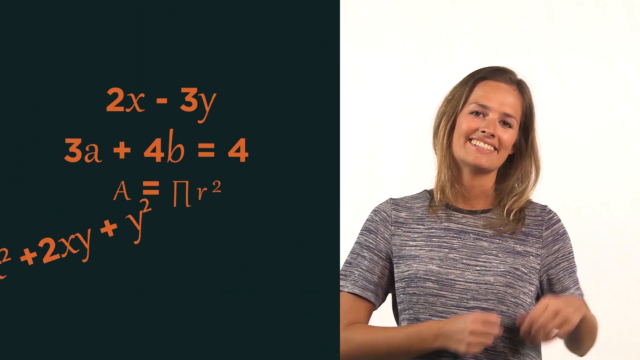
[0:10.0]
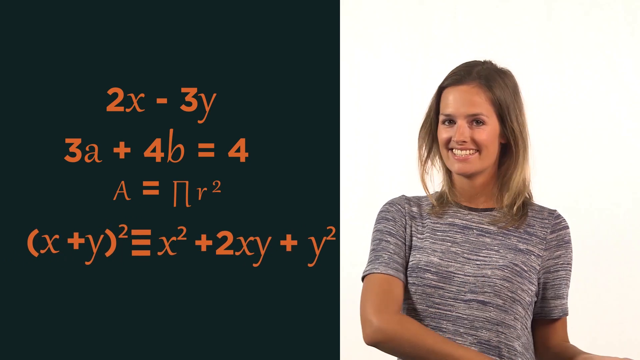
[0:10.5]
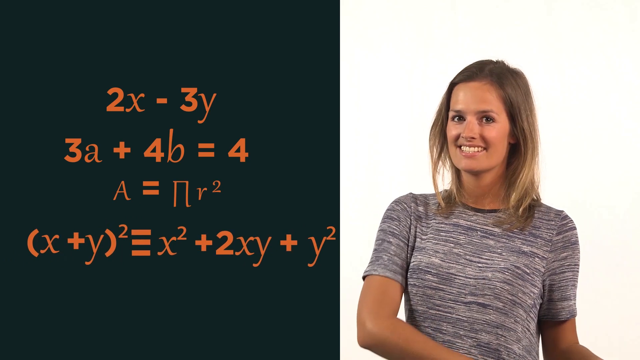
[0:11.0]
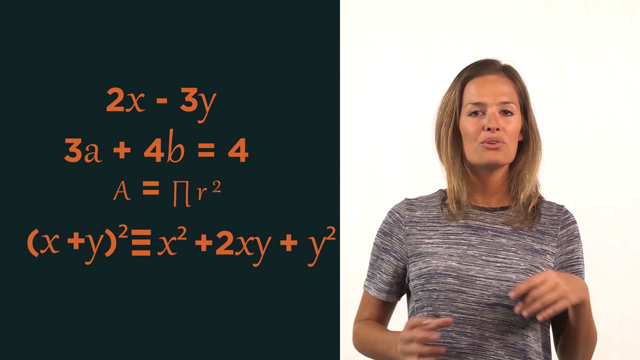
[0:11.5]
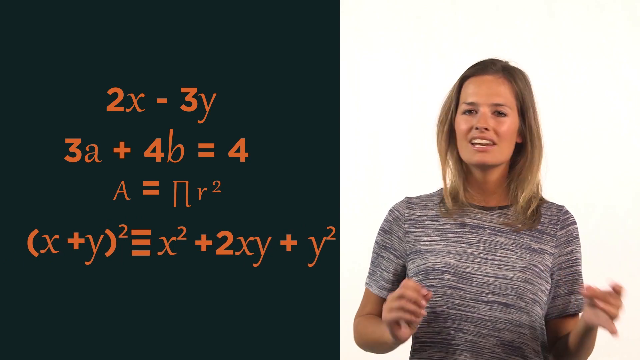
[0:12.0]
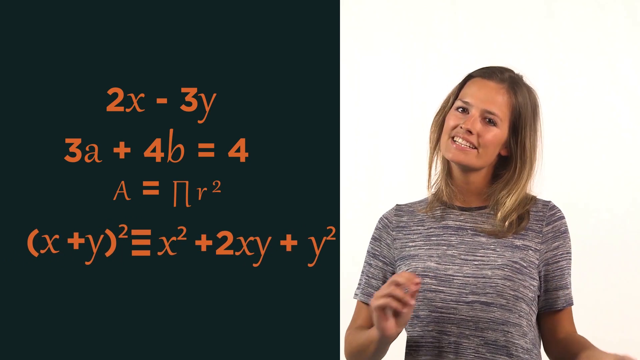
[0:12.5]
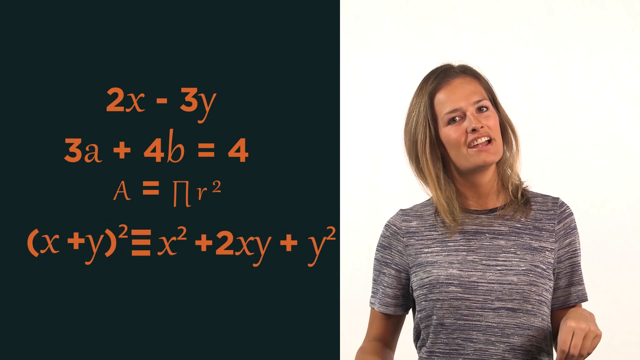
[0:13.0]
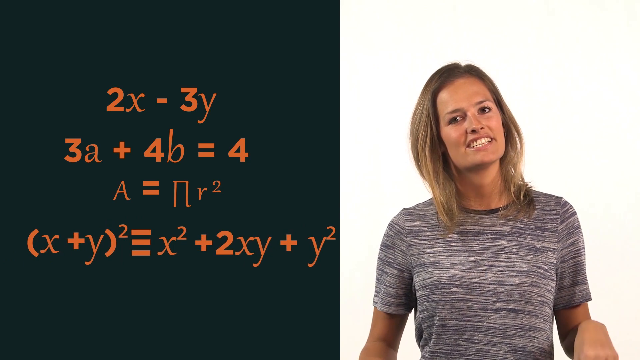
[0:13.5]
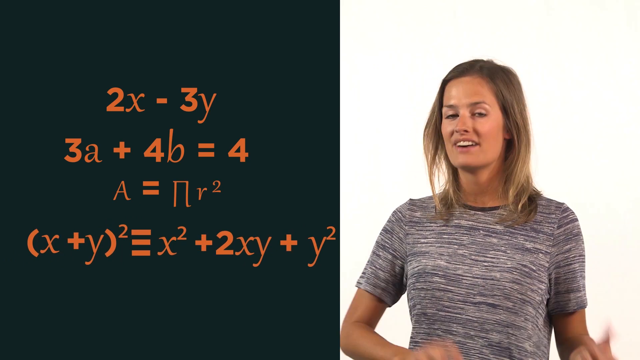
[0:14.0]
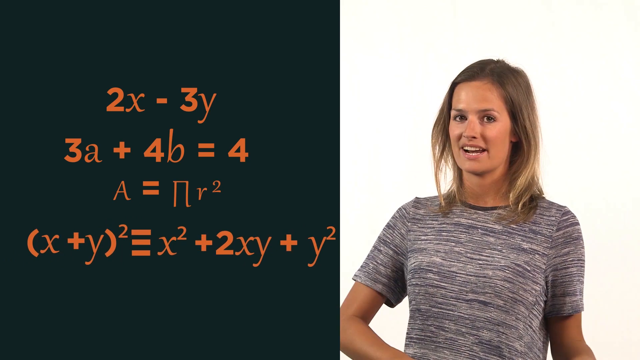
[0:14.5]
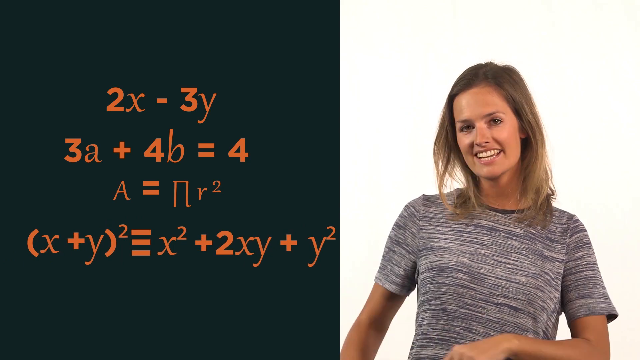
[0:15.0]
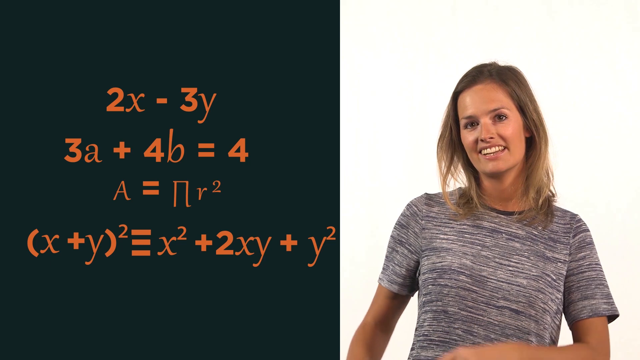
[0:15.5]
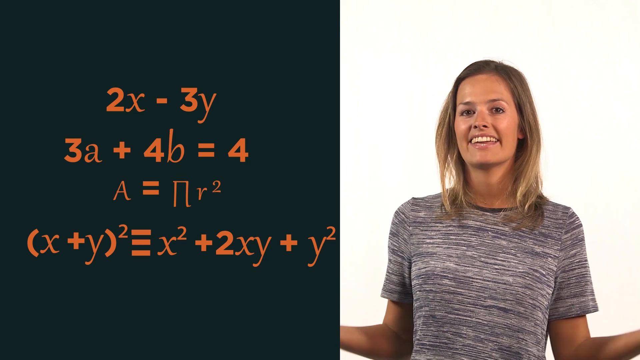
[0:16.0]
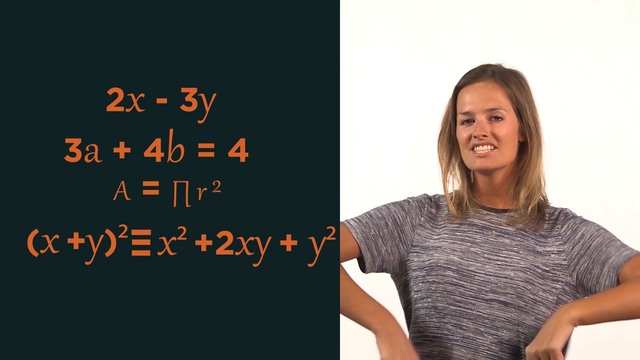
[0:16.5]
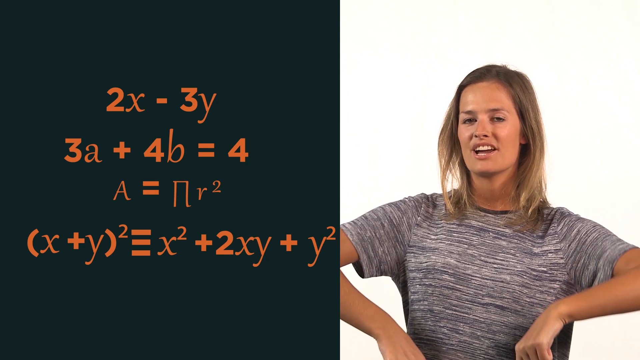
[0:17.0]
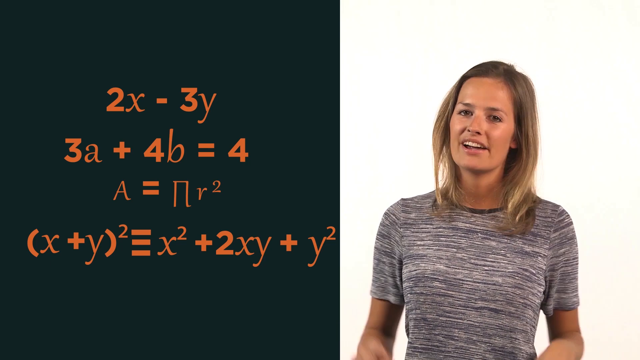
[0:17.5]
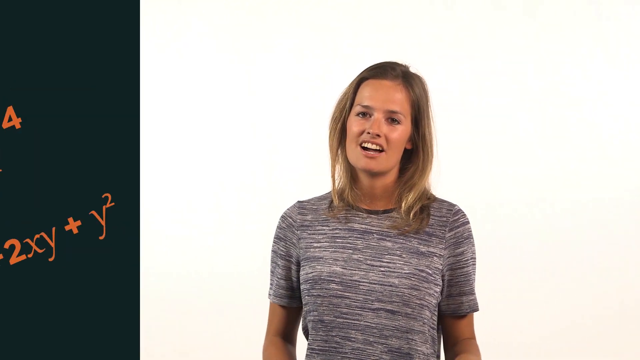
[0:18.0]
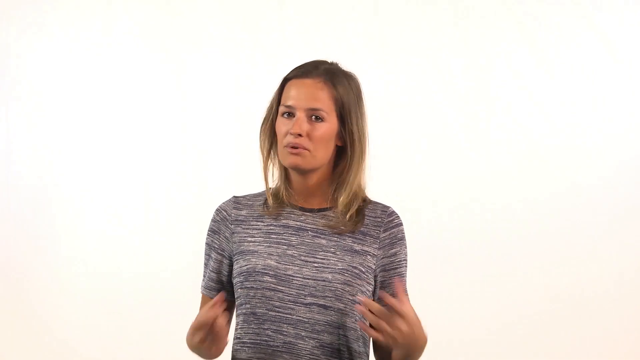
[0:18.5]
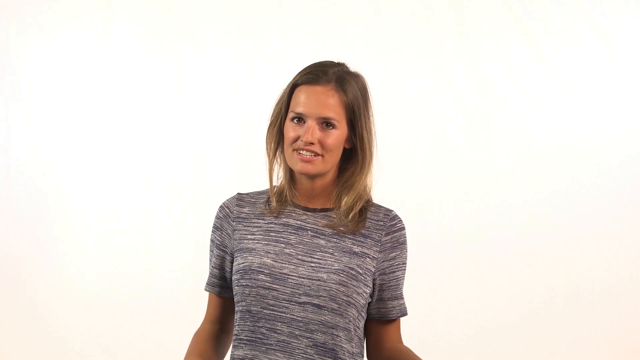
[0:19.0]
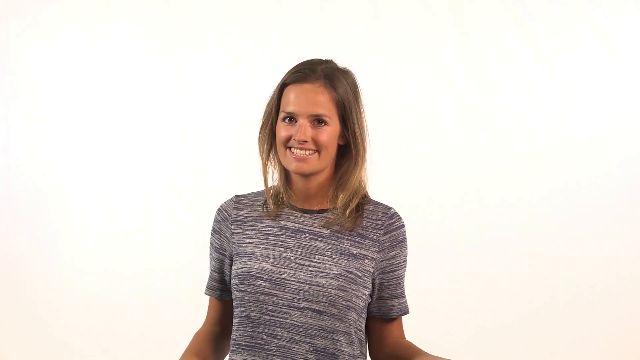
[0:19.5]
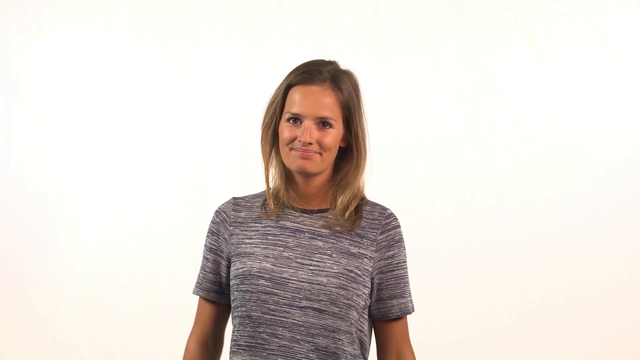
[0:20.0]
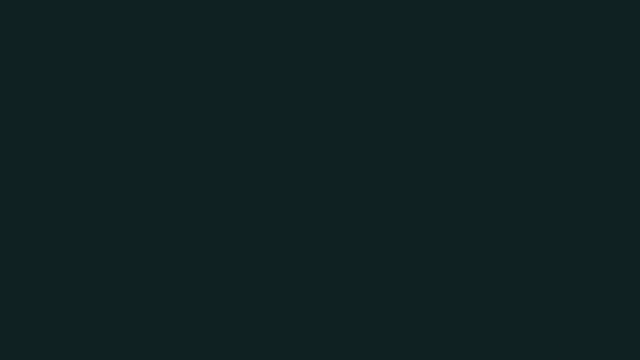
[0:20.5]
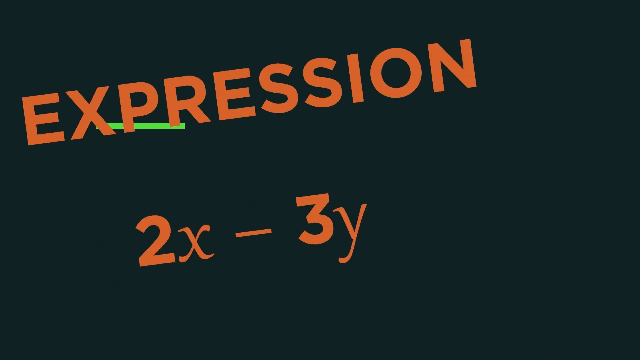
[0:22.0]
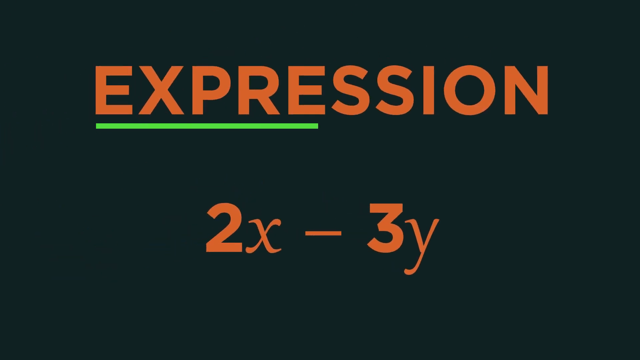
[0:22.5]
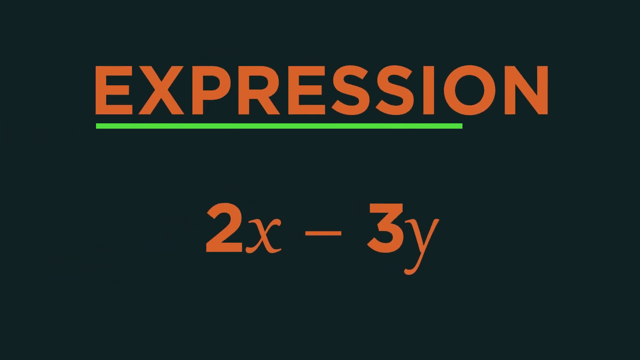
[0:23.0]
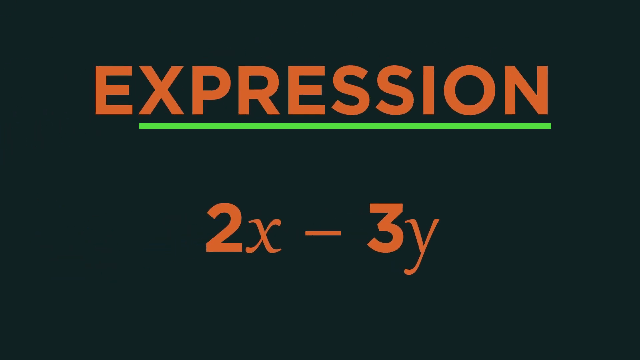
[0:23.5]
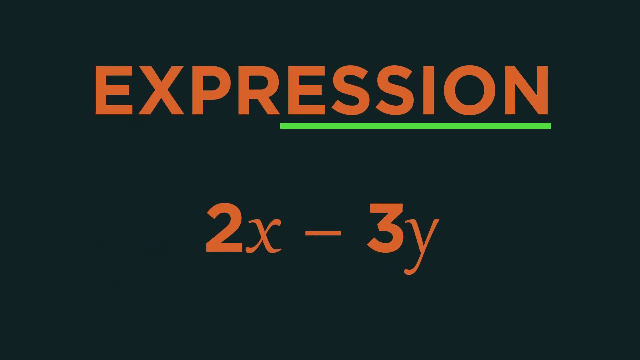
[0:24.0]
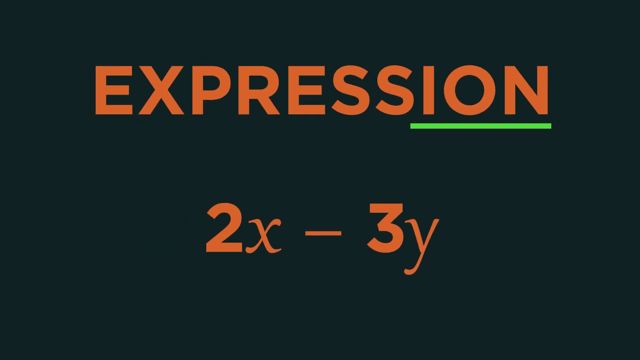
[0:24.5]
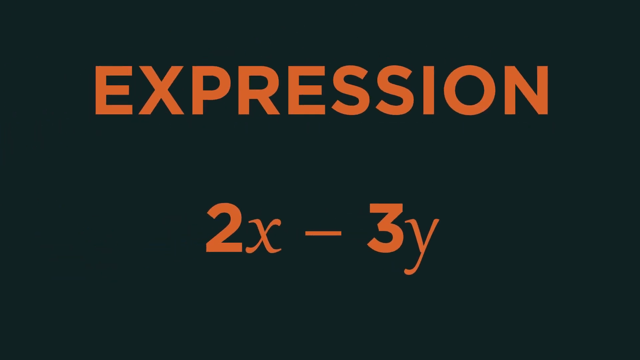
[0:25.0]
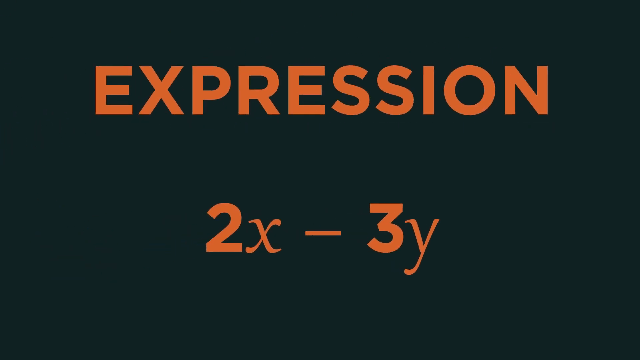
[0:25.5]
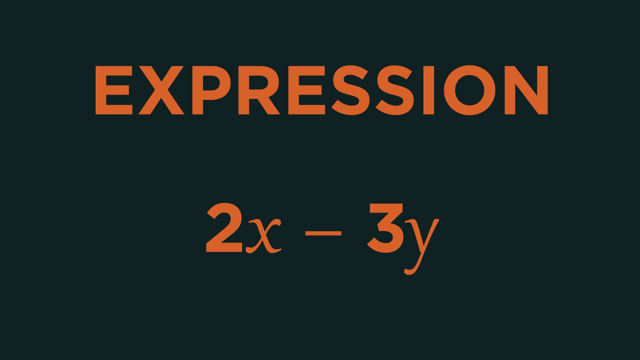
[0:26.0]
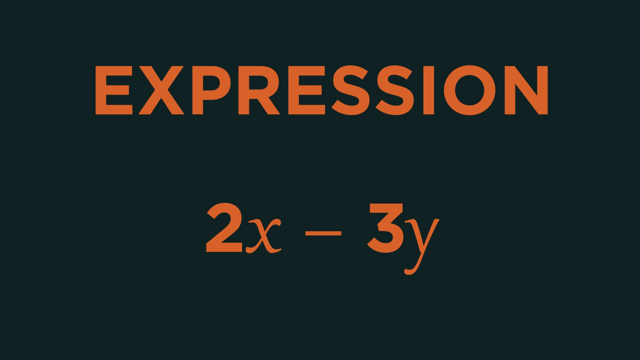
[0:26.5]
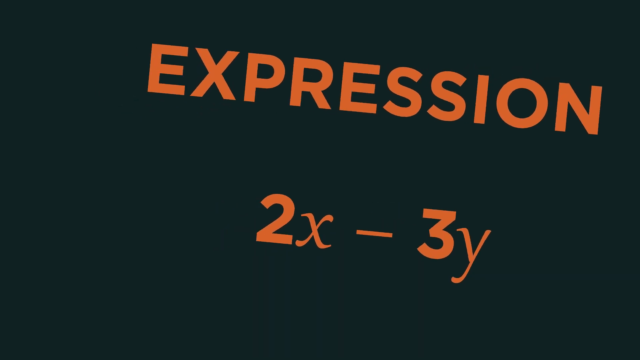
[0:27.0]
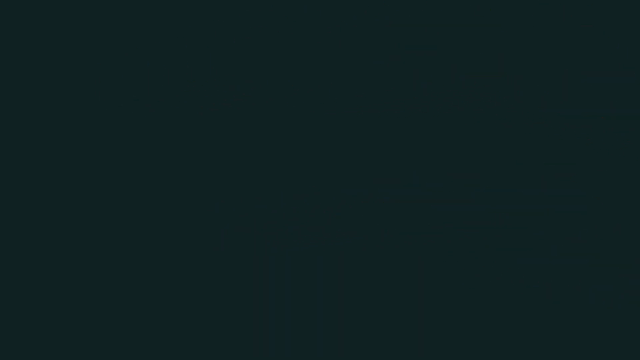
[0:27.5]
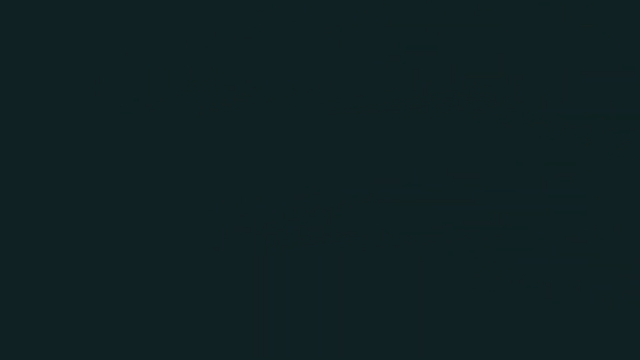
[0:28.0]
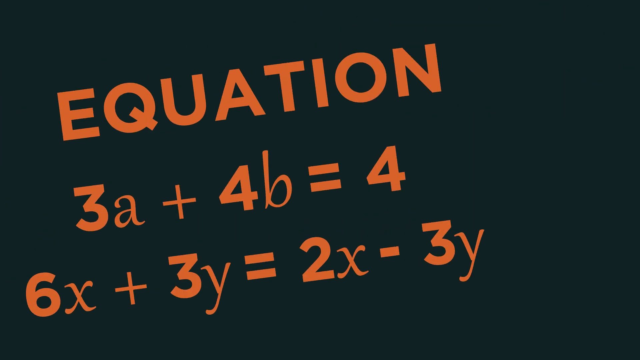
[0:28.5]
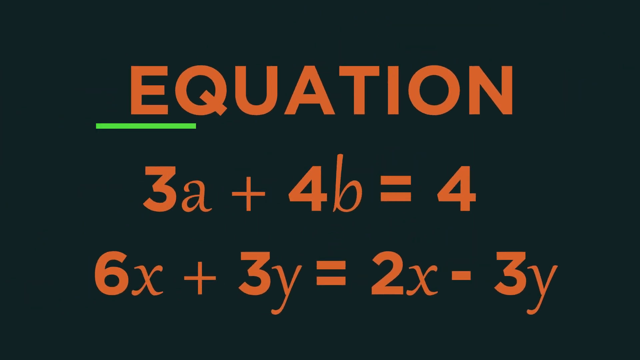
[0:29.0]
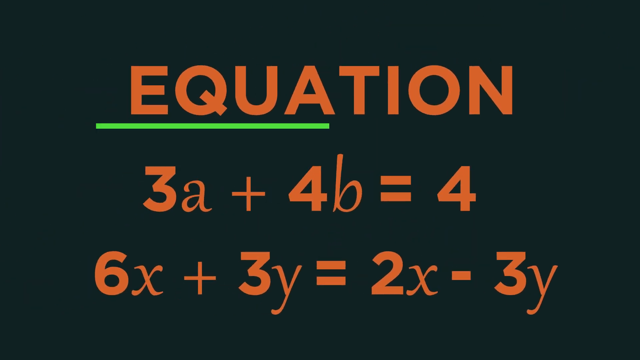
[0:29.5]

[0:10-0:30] A white girl in what looks like a gray t-shirt, against a white background, talks about equations shown on the left-hand side, where orange equations are on a black background. The orange equations slide to the left and the shot focuses on the girl as she continues speaking, using hand and arm gestures, and she smiles. The screen then turns all black with several equations in orange text, and it looks like she is speaking about them. On a black screen, "expression" and "2x minus 3y" appear in orange. That text slides to the right, "equation" appears, and a green circle begins to appear.